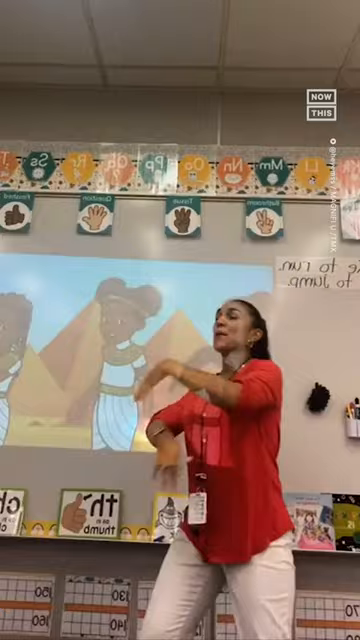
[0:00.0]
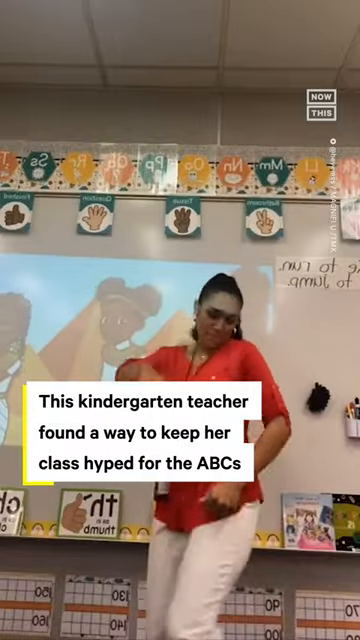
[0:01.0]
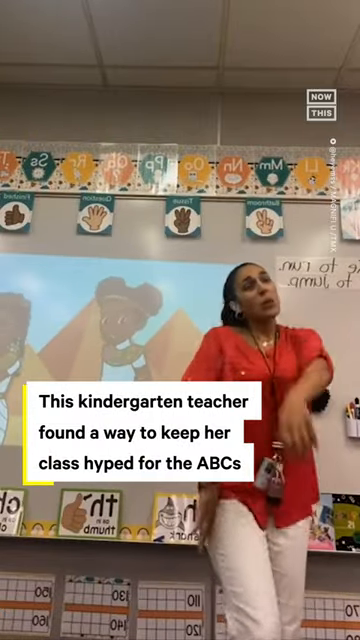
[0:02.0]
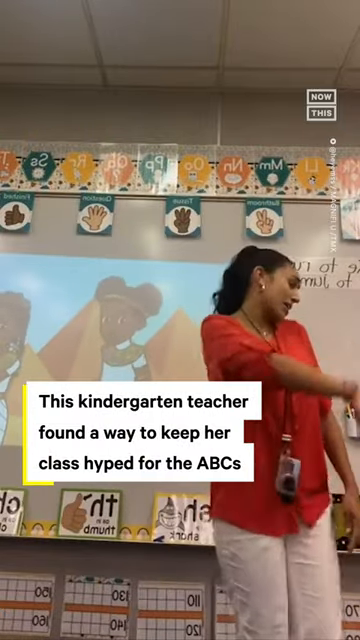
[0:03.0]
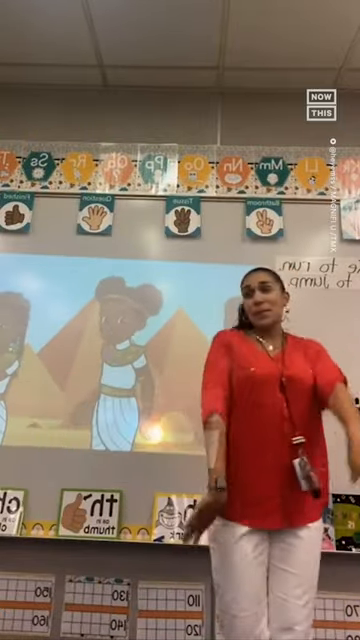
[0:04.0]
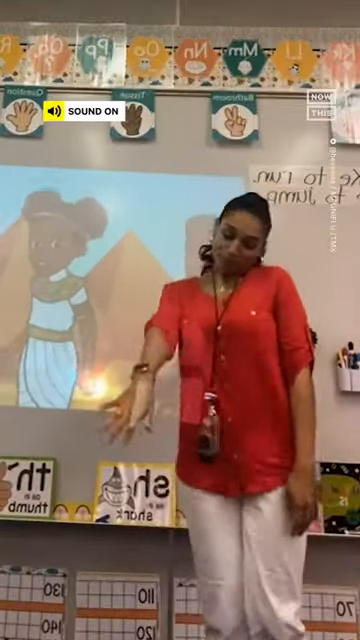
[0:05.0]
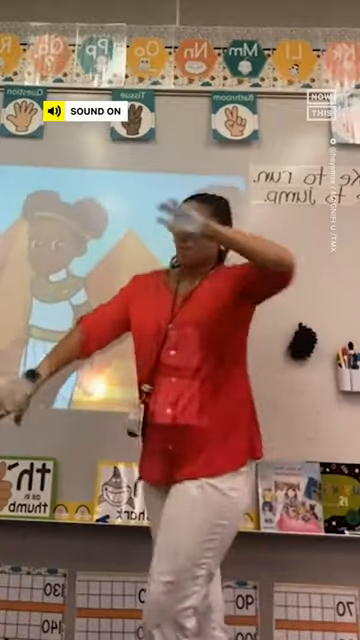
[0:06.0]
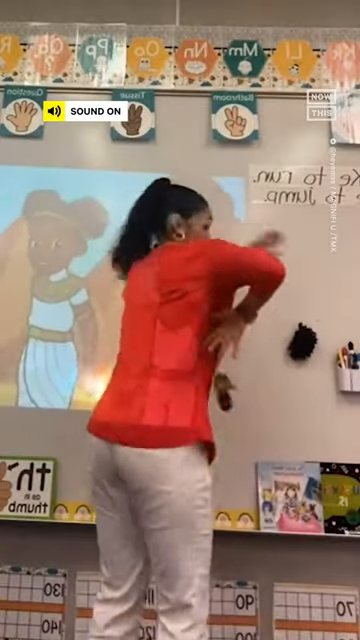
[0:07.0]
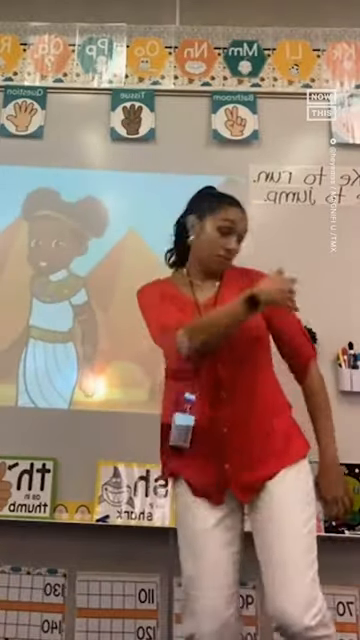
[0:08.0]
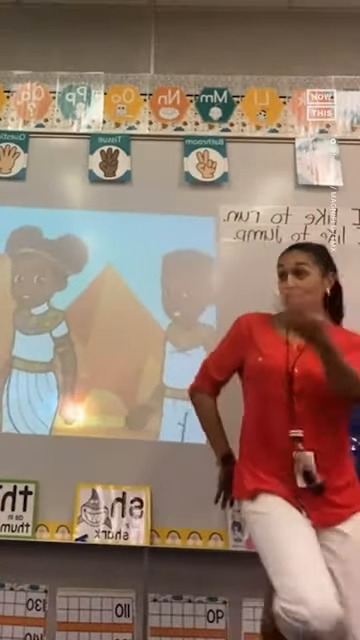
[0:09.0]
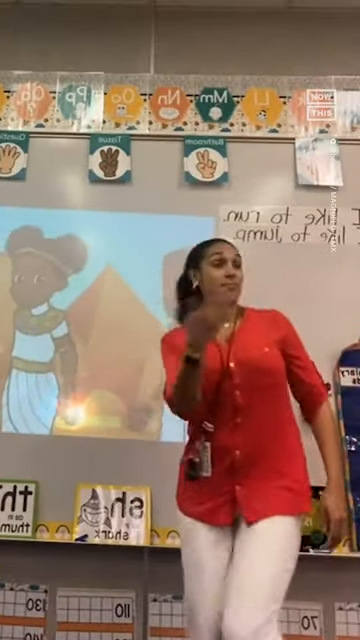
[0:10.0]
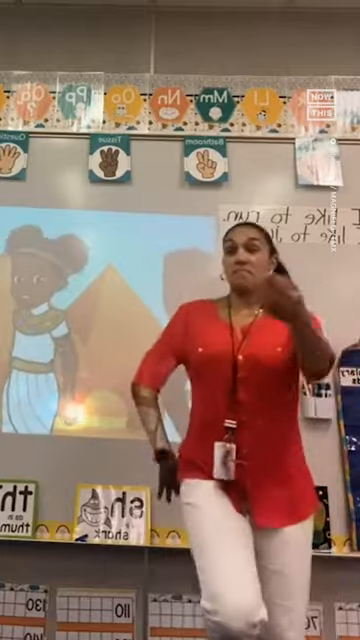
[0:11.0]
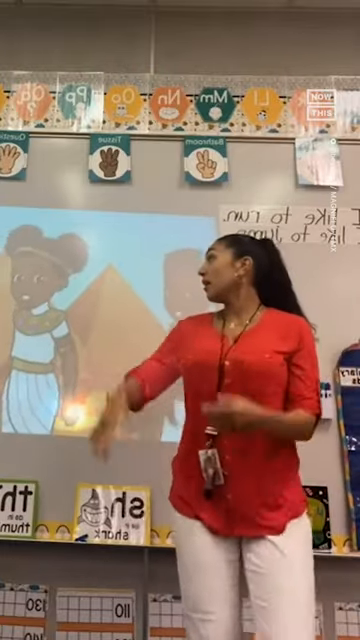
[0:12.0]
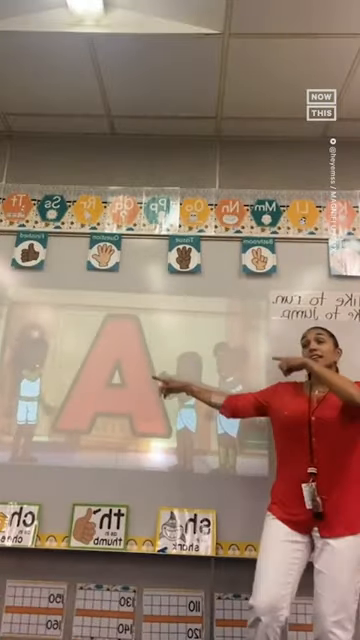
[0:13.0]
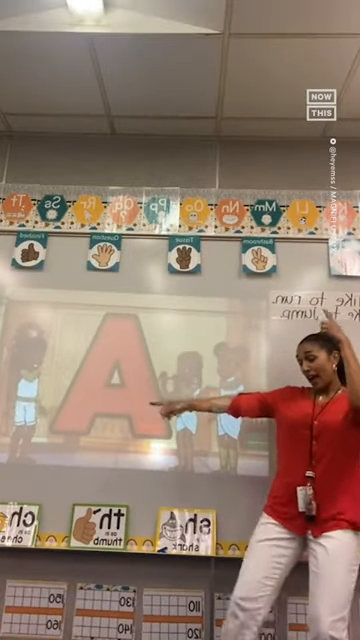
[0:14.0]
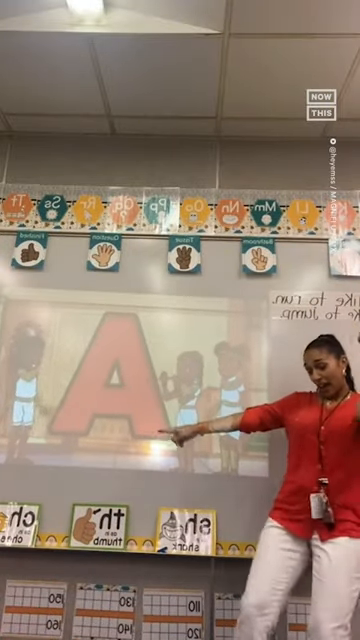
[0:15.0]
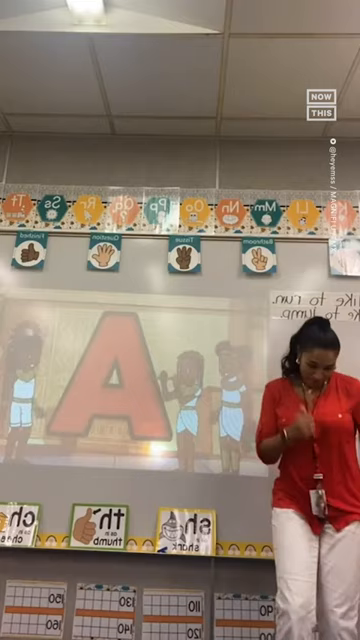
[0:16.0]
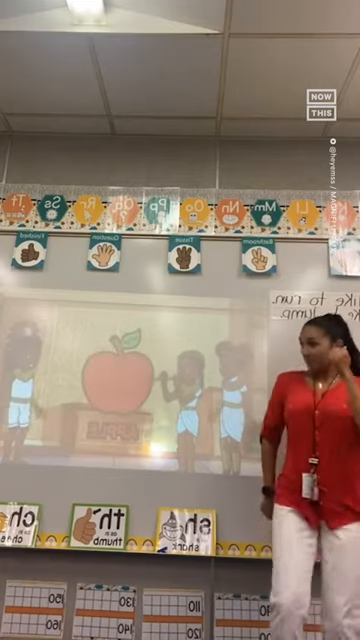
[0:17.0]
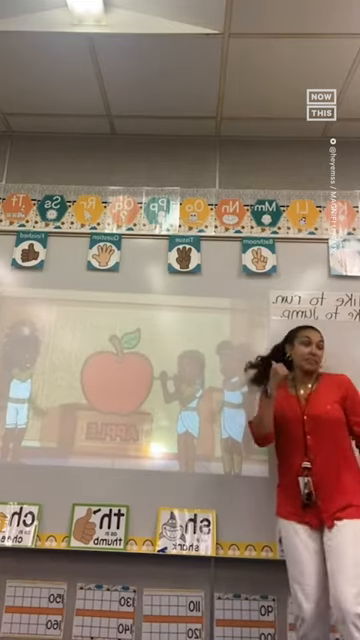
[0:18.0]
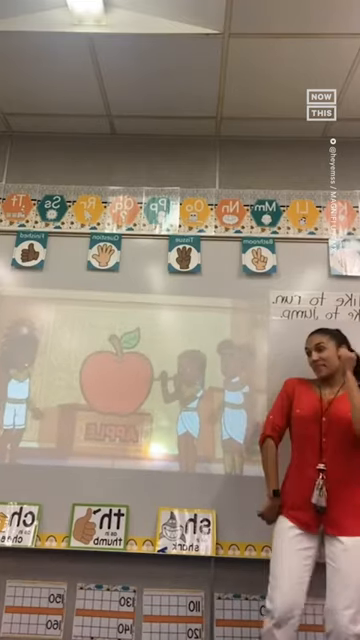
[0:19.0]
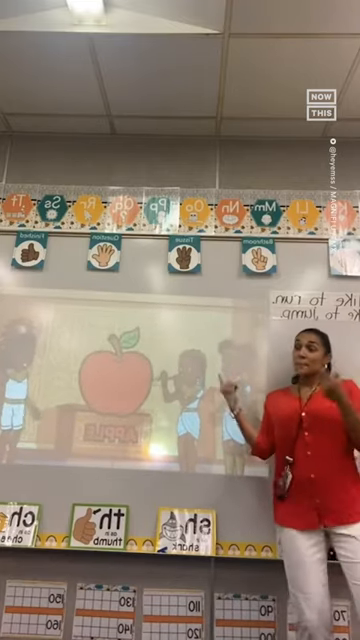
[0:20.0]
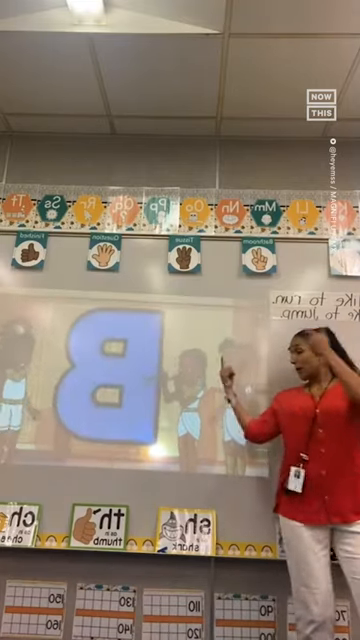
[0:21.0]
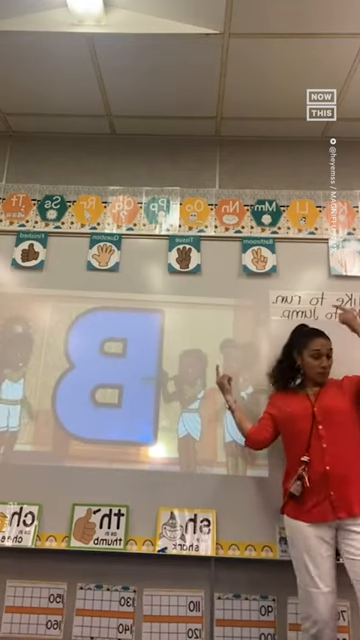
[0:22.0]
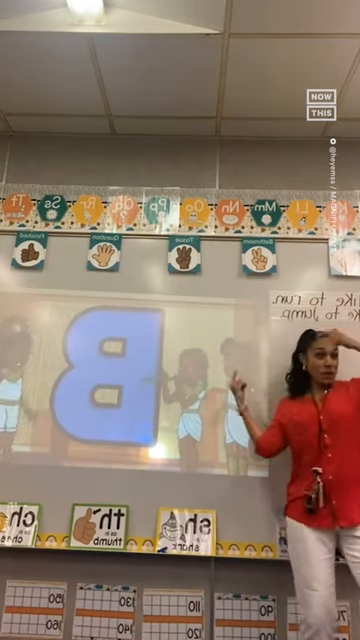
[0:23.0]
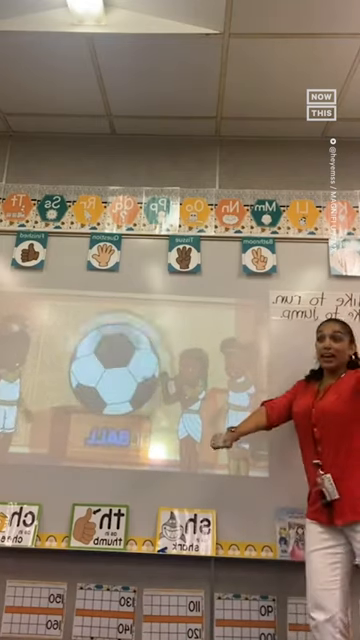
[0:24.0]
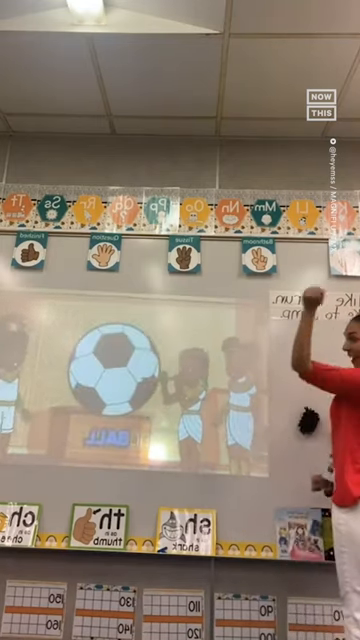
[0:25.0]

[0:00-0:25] A woman dances in a classroom while on-screen text reads "this kindergarten teacher found a way to keep her class hyped for the ABCs." She is probably about middle-aged and wears a red shirt with white pants, along with what looks like a necklace and a badge. She does sort of slow dances with funny faces, turns around in a full circle, and moves her arms, seemingly dancing to a beat. A projector shows an animated version of the alphabet with the letter A in red; she points to it, and there is also dancing in the animated video. An apple appears to go with the letter A. After that, the projection turns to the letter B in blue, and she dances to that as well as a soccer ball is shown. Around the classroom are a variety of hand emojis, other letters, and typical words seen in a school classroom.